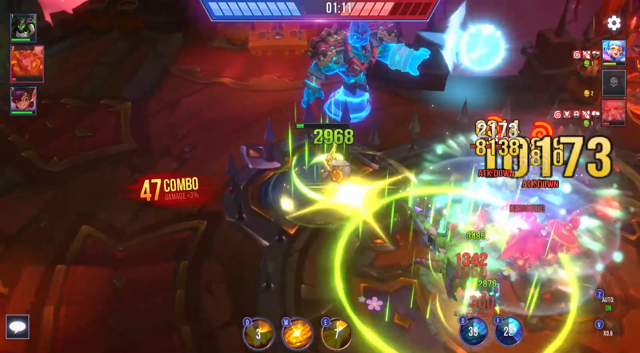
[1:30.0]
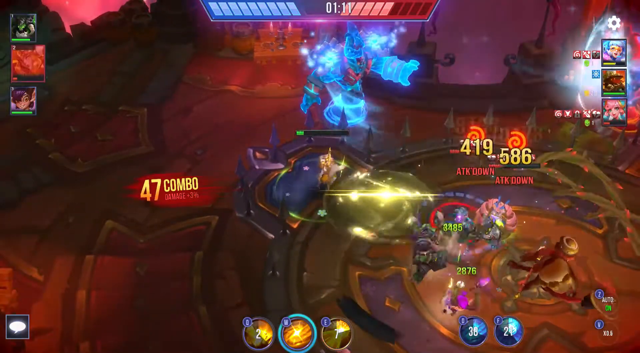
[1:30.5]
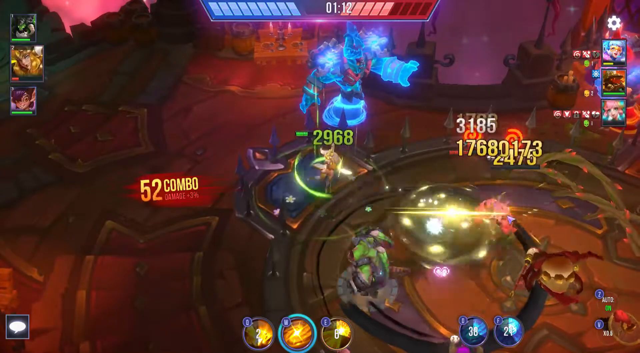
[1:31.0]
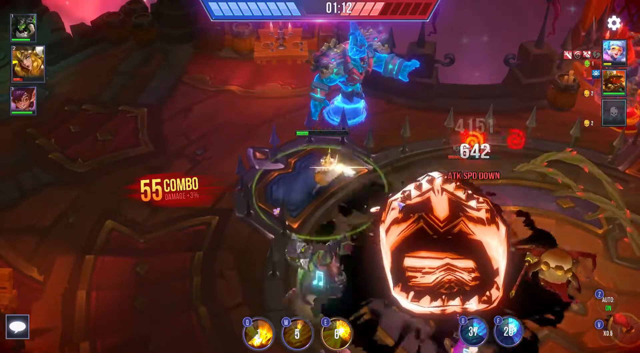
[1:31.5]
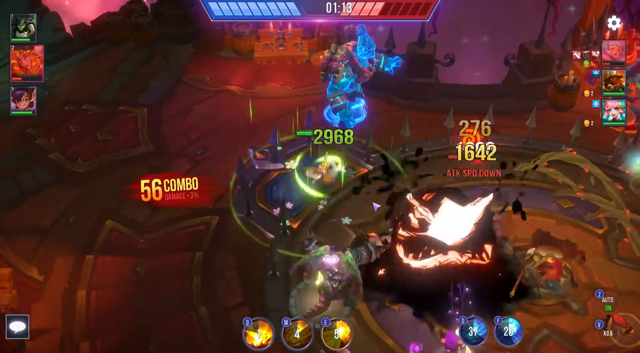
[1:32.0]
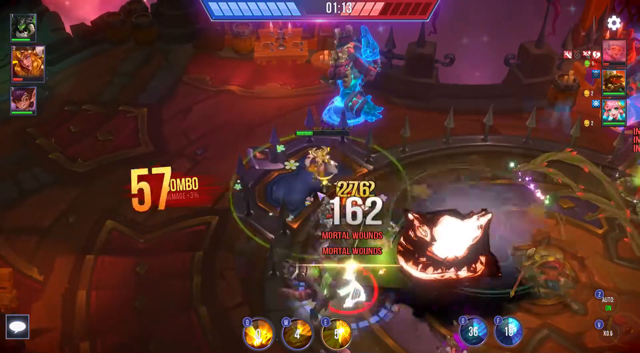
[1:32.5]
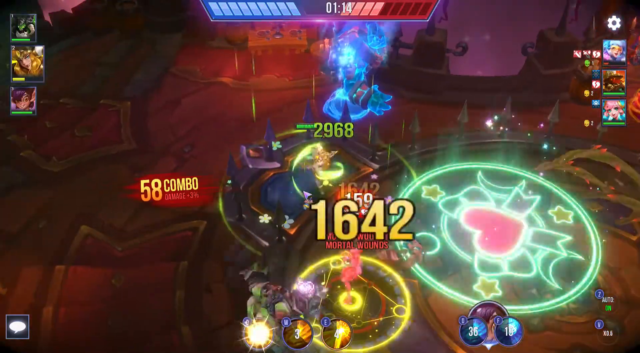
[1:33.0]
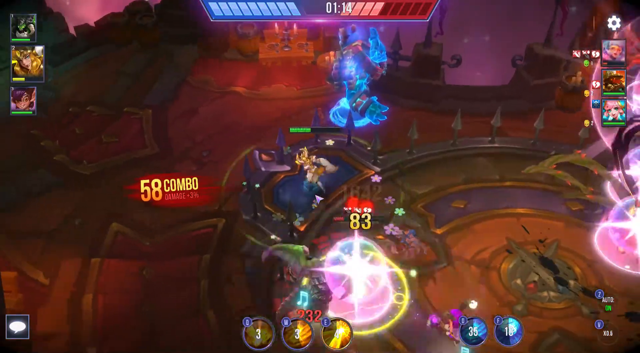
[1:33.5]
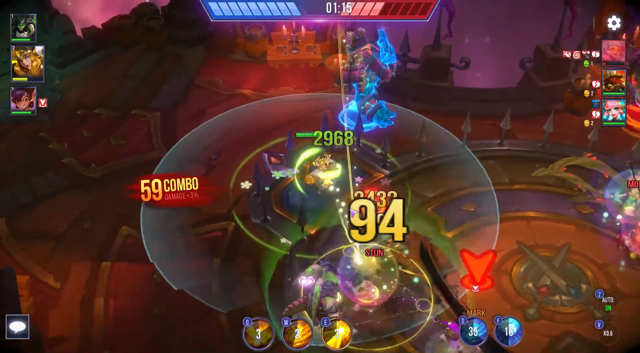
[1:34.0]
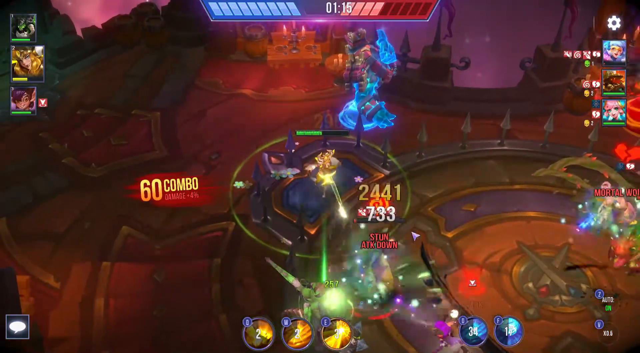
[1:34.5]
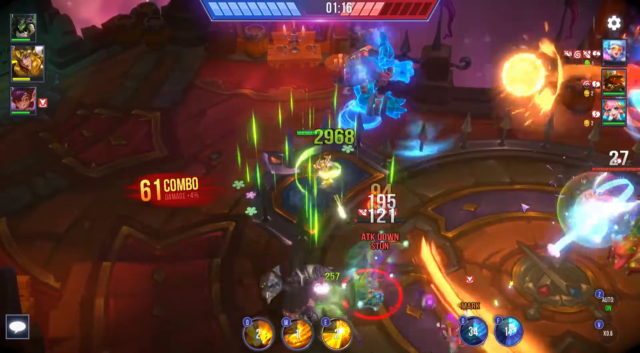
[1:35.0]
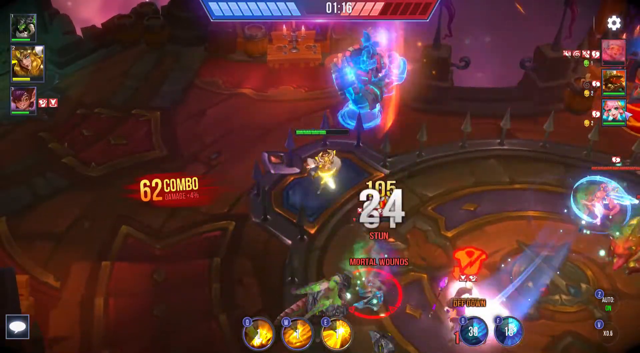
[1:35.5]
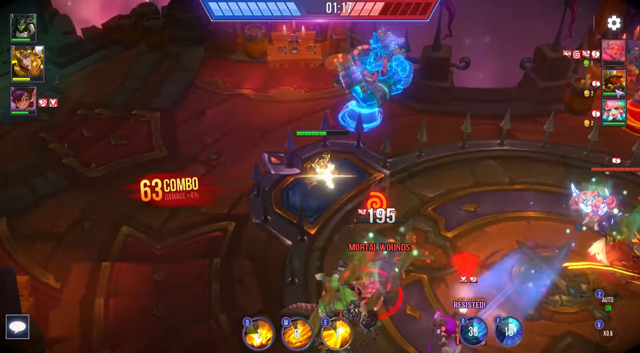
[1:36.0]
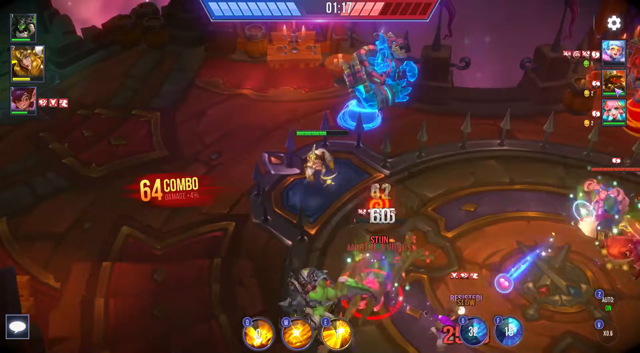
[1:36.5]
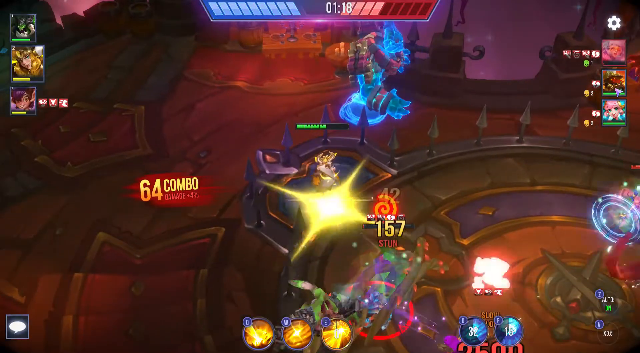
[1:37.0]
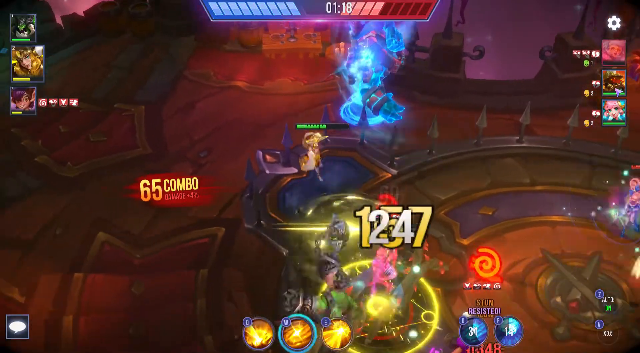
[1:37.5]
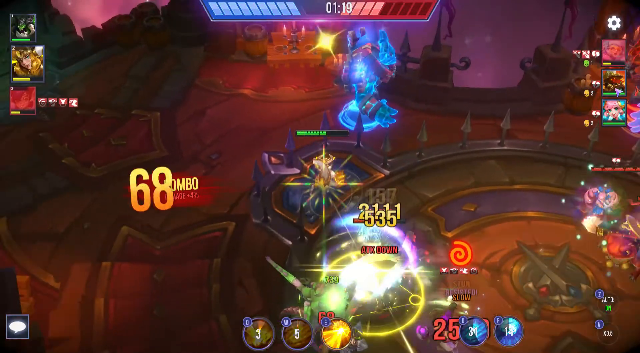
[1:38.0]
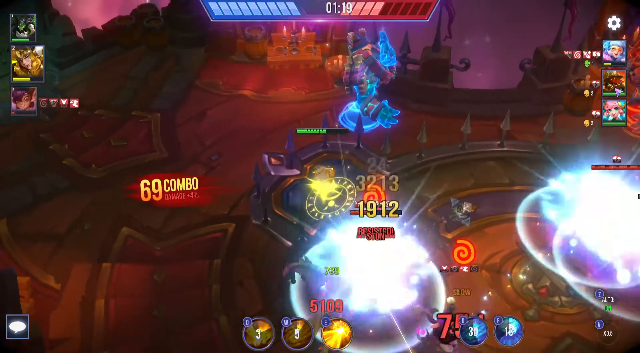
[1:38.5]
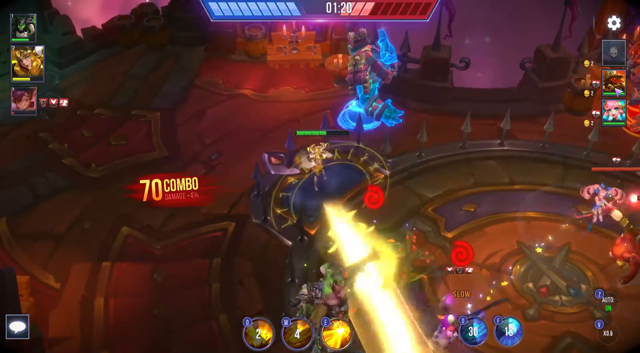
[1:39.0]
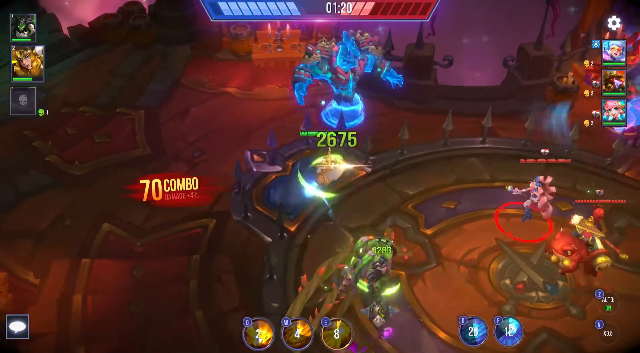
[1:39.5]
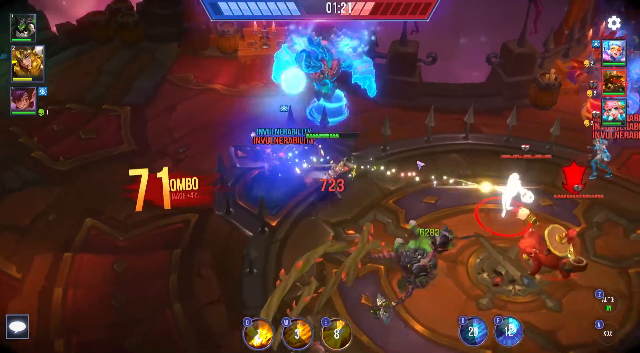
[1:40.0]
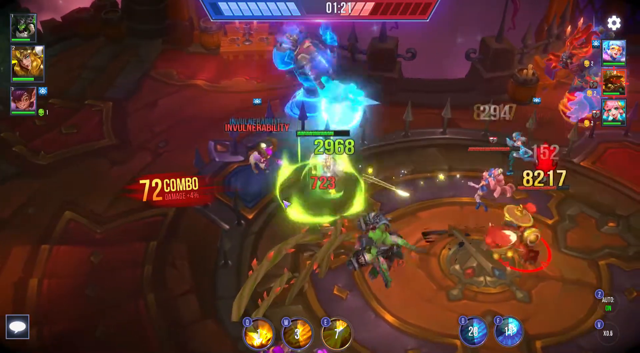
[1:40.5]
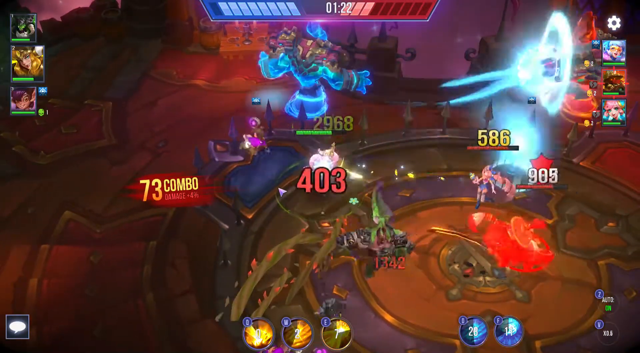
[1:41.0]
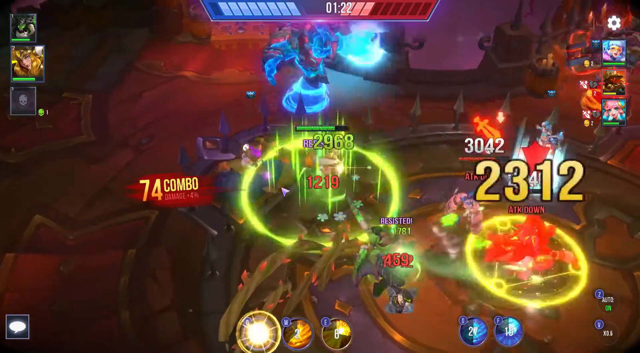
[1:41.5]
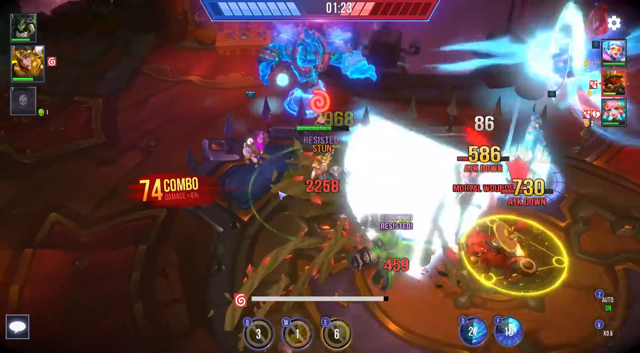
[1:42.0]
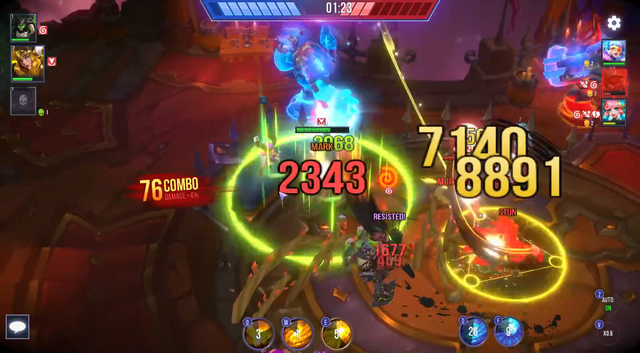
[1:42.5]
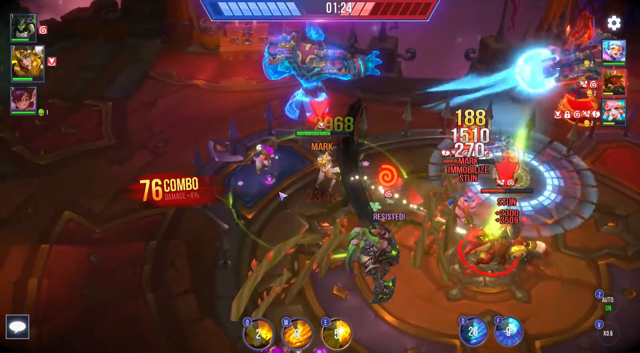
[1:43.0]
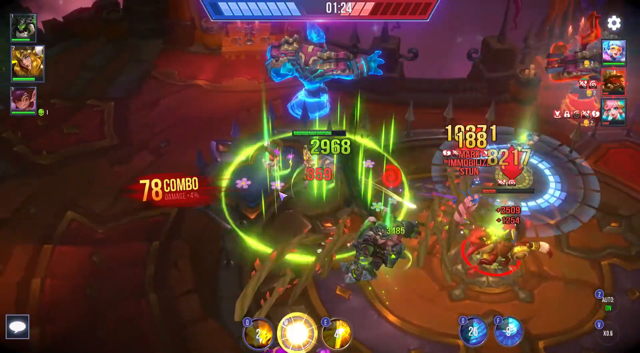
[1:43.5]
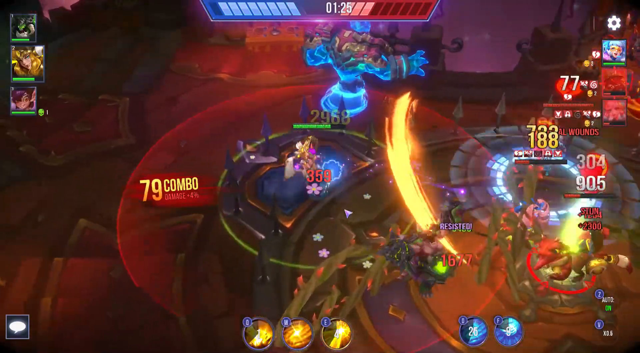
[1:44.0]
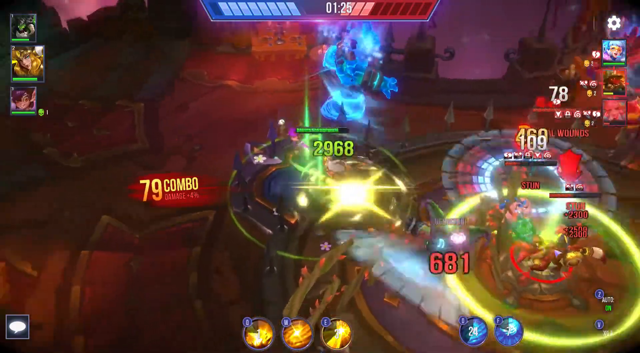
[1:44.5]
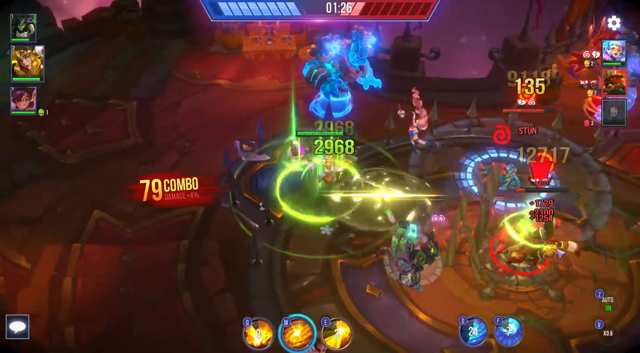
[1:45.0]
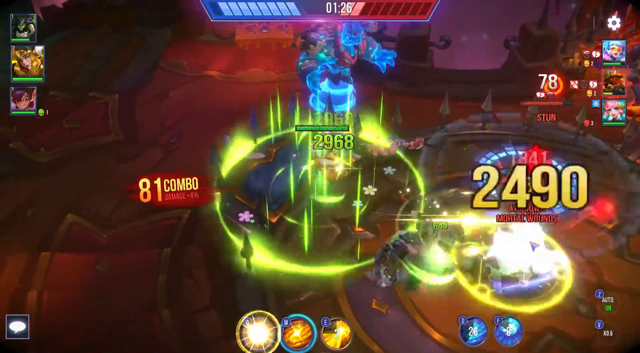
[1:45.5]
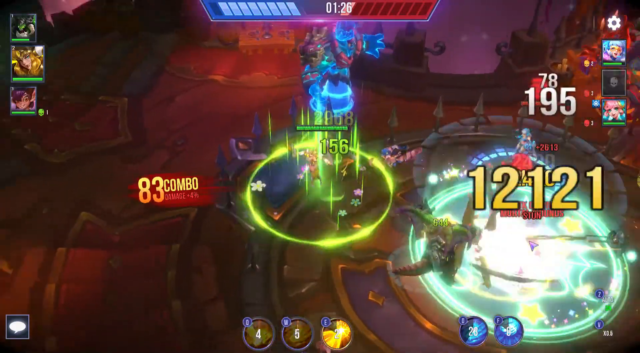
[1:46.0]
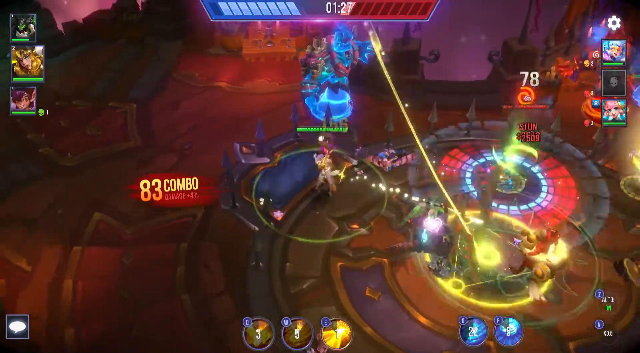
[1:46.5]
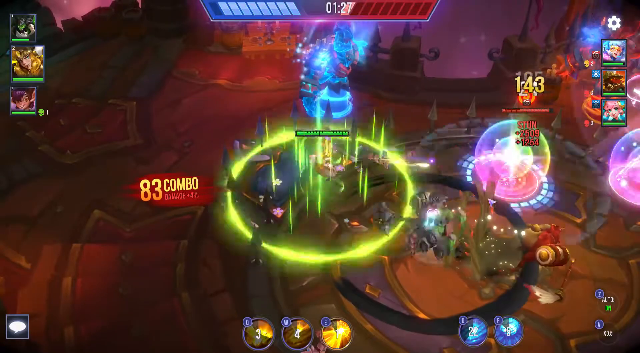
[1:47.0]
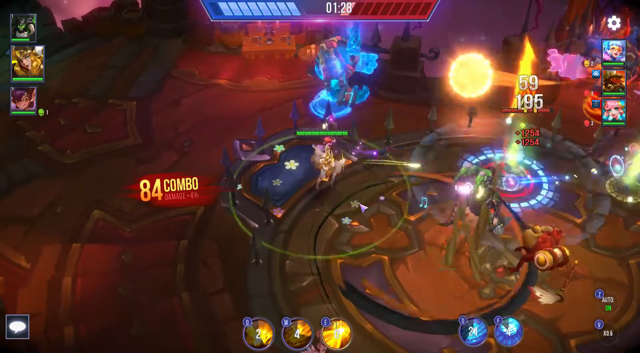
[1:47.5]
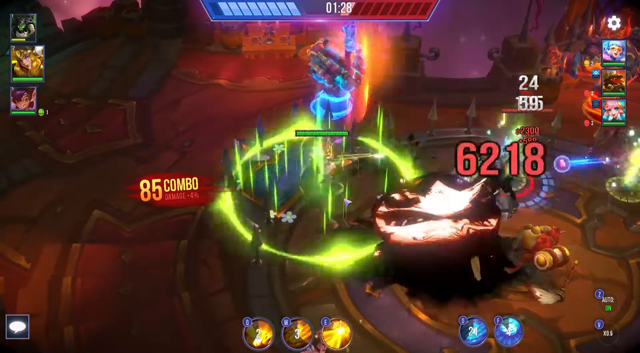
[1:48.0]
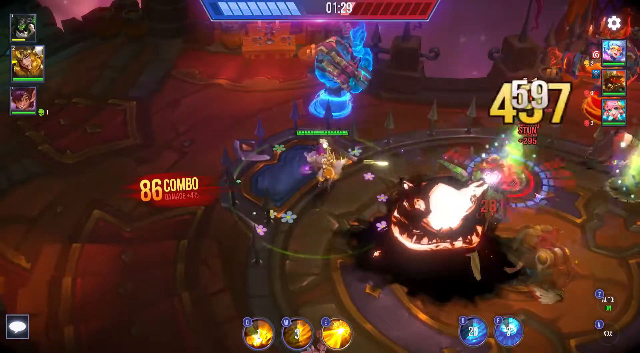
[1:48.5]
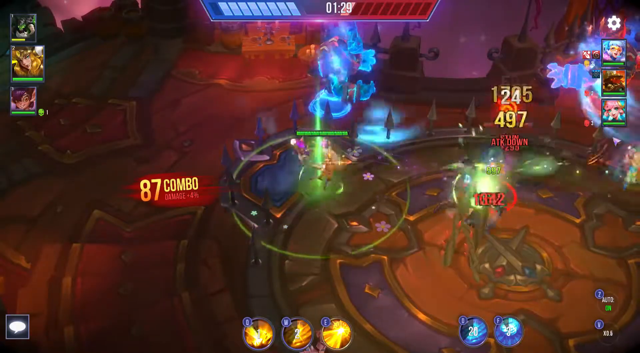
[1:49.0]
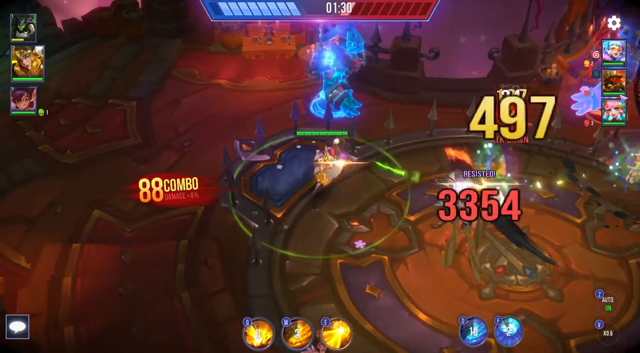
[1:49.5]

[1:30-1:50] Someone appears to be streaming a video game; the person is not visible, only the game. It is an animated 3D battle game with probably five or six characters fighting each other. The background is red, built to look like a red brick or stone battle arena, with a floor that has a red brick look and a big circle in the middle large enough for the five or six characters to battle. The battle appears to use mostly magical or mystical powers, with characters shooting lightning beams and energy beams from their hands in blue, red, green and probably one or two other colors. The characters have different sizes and looks; they do not appear to be typical human characters, looking more like animals or anime characters, and maybe one or two look like oversized fighters.